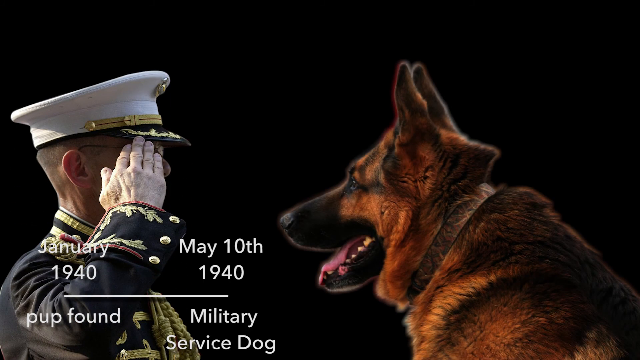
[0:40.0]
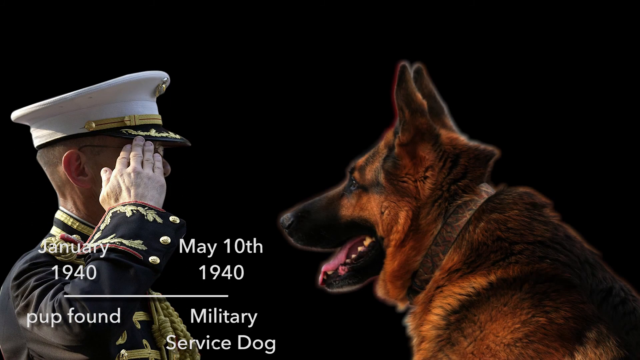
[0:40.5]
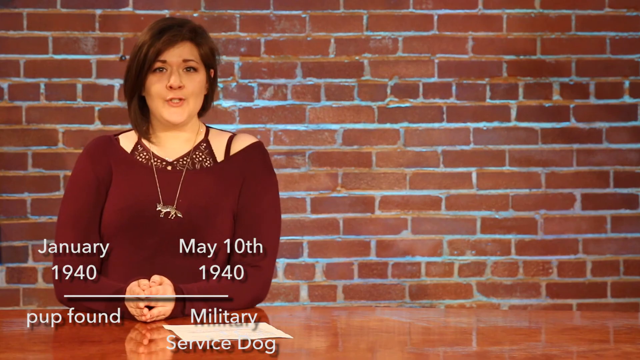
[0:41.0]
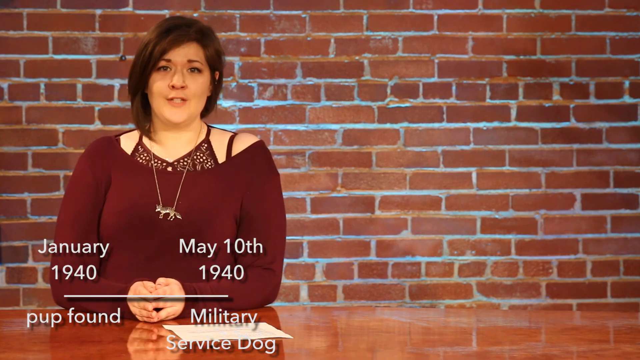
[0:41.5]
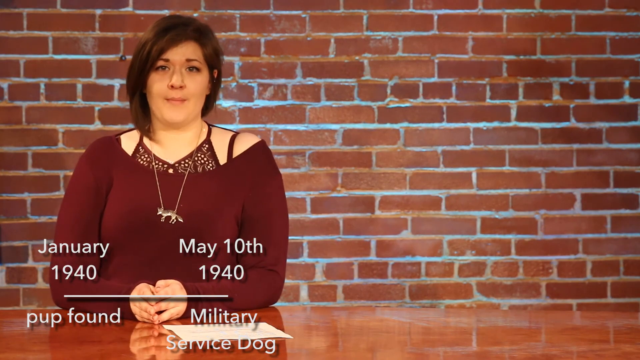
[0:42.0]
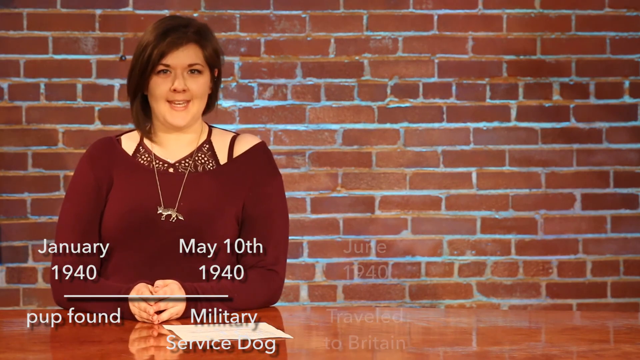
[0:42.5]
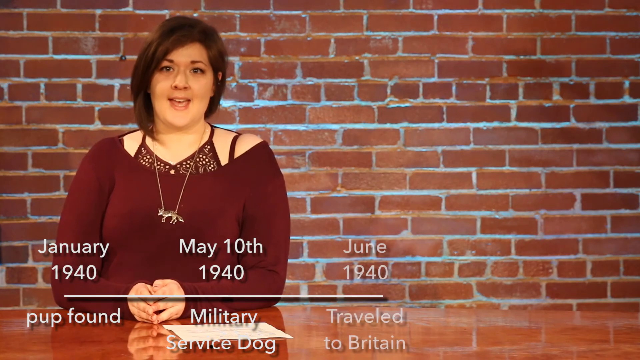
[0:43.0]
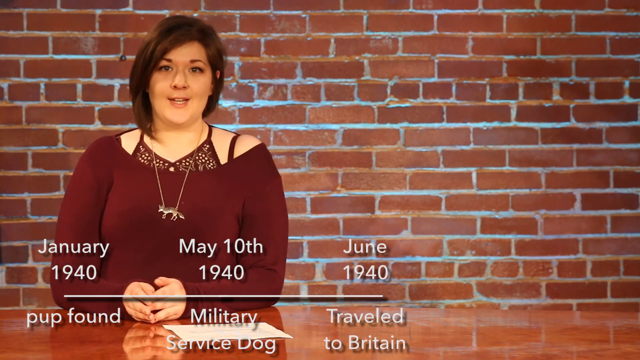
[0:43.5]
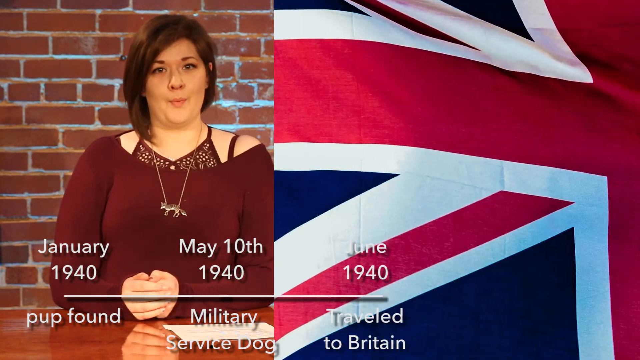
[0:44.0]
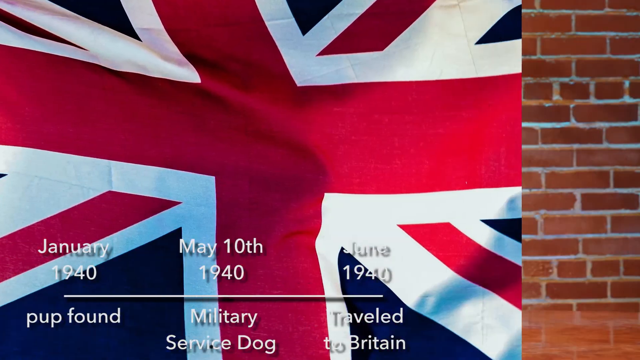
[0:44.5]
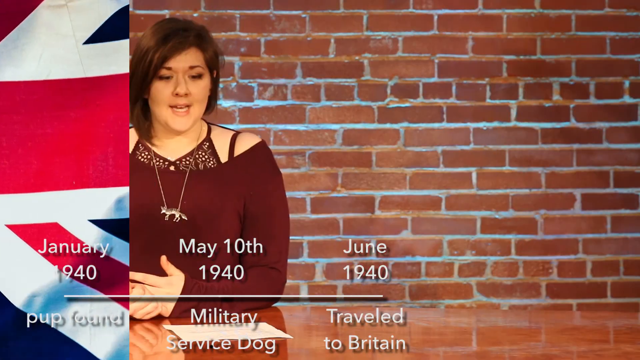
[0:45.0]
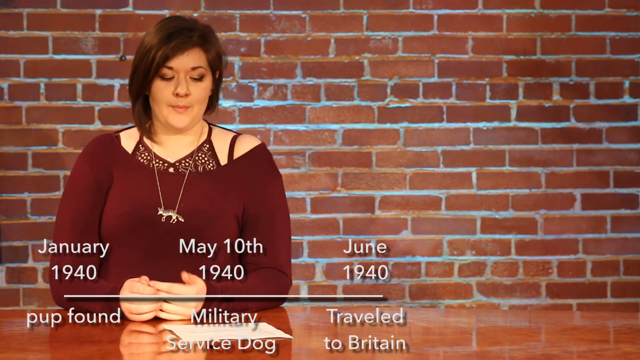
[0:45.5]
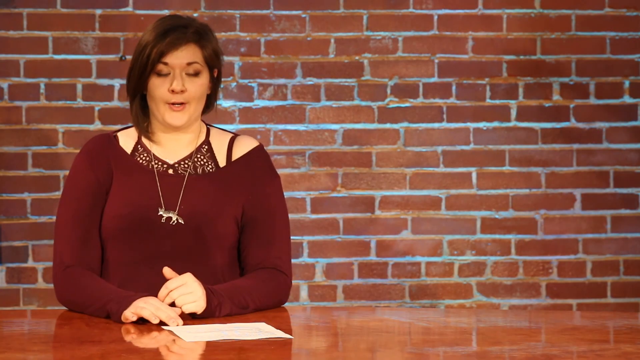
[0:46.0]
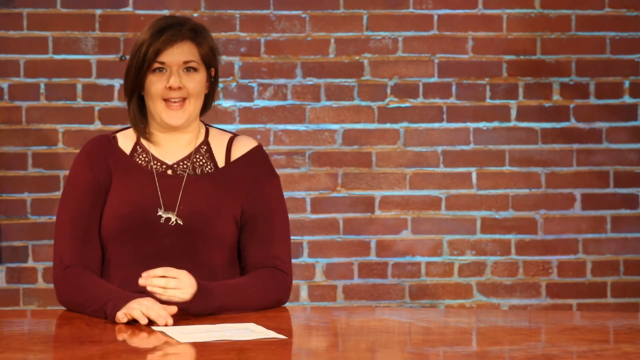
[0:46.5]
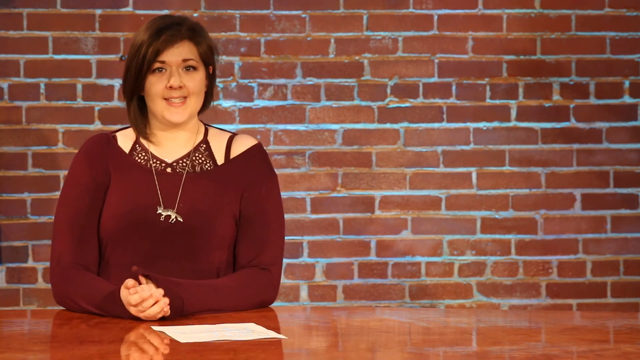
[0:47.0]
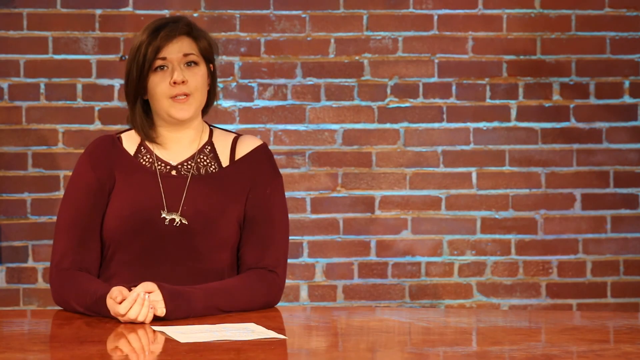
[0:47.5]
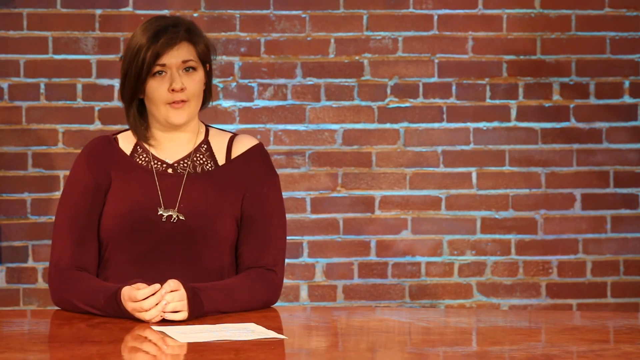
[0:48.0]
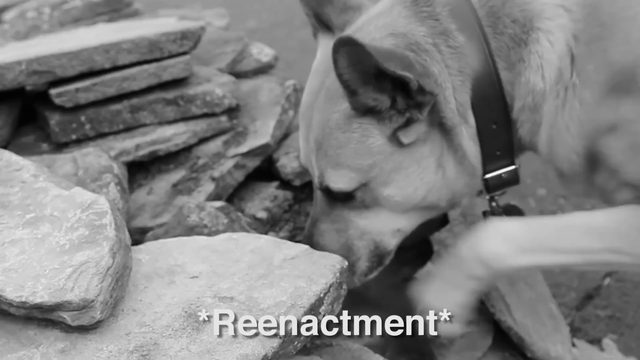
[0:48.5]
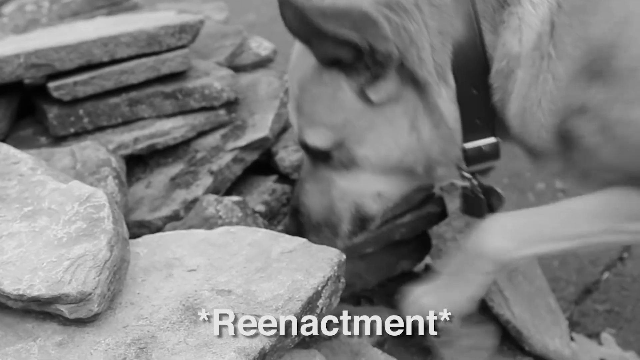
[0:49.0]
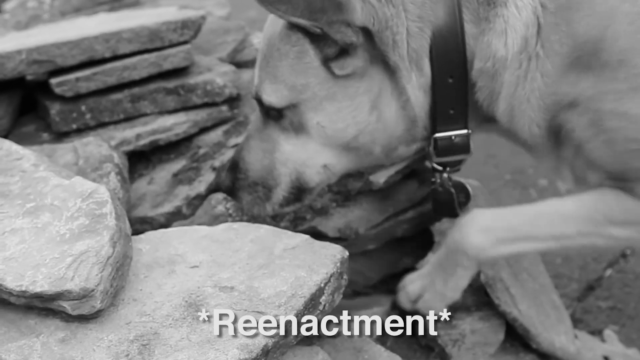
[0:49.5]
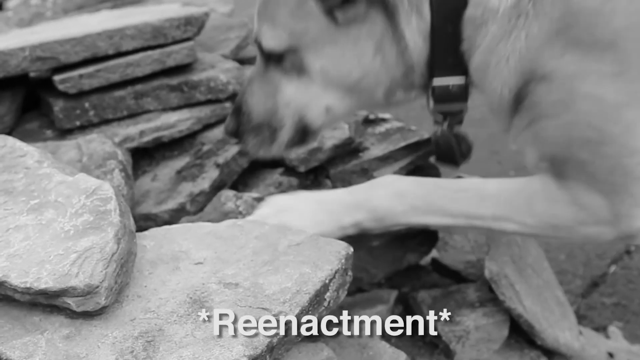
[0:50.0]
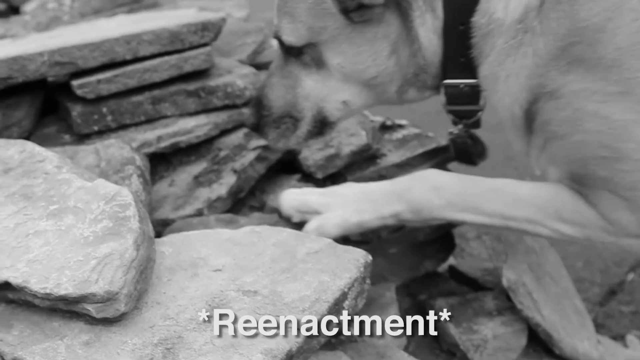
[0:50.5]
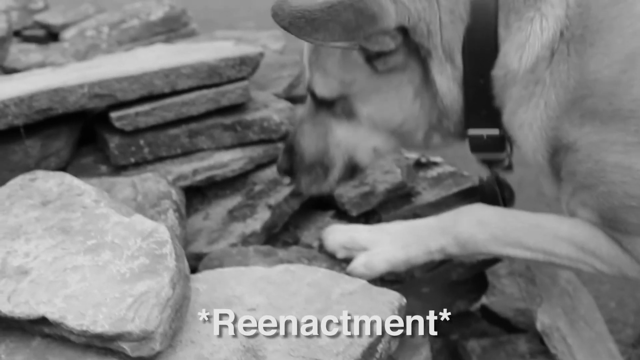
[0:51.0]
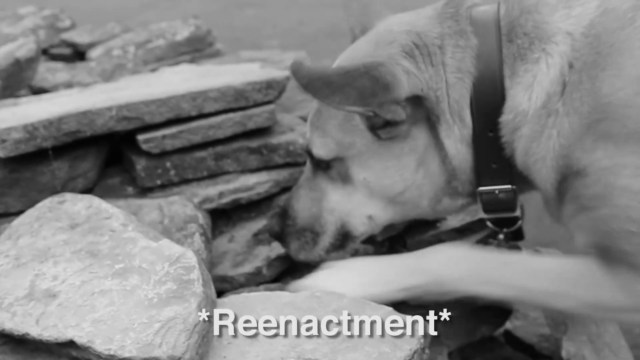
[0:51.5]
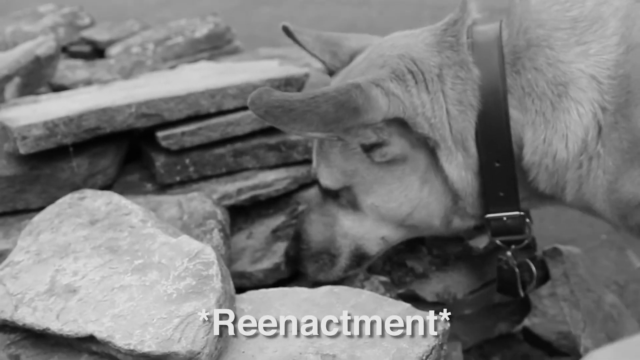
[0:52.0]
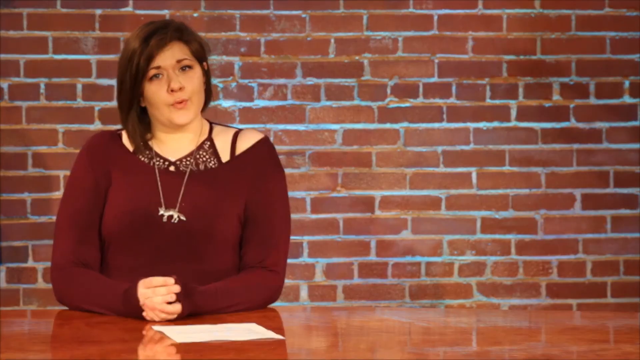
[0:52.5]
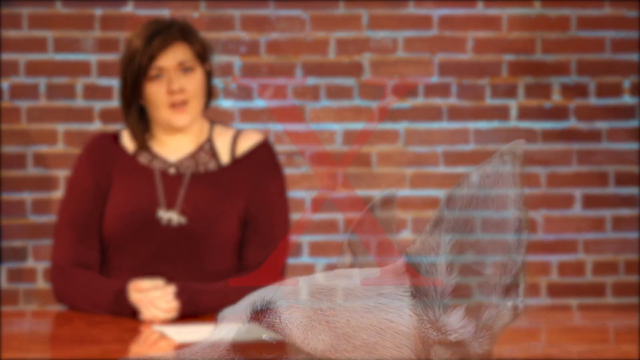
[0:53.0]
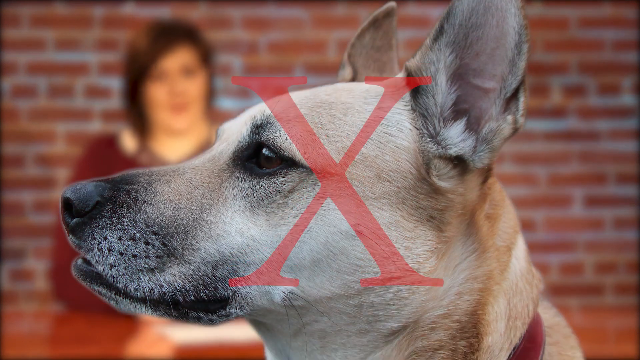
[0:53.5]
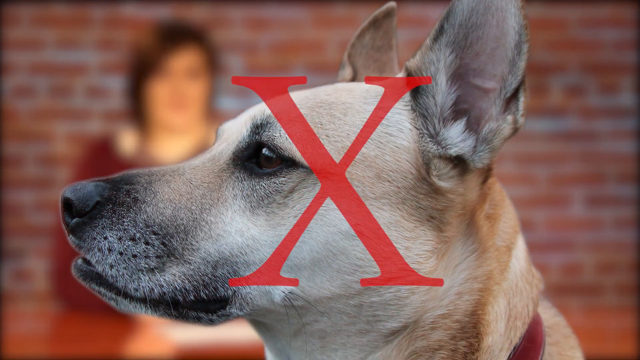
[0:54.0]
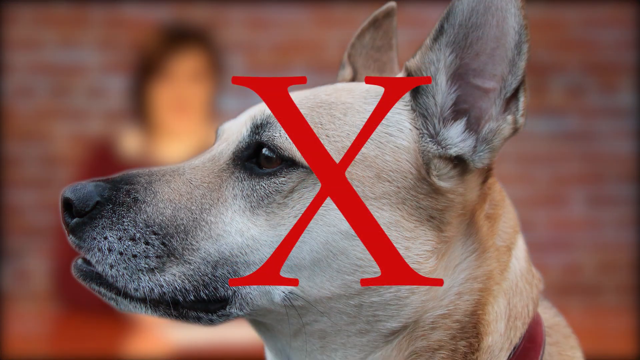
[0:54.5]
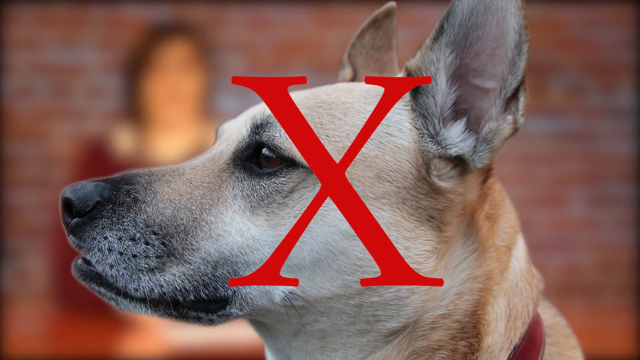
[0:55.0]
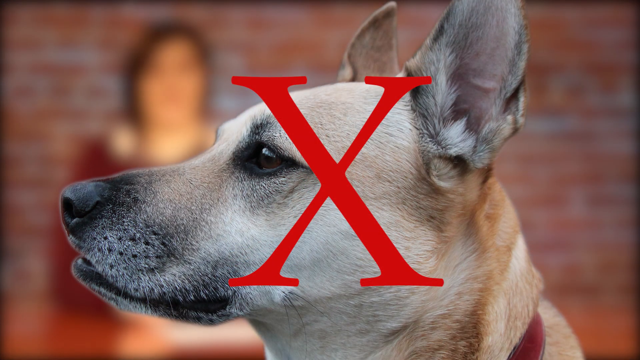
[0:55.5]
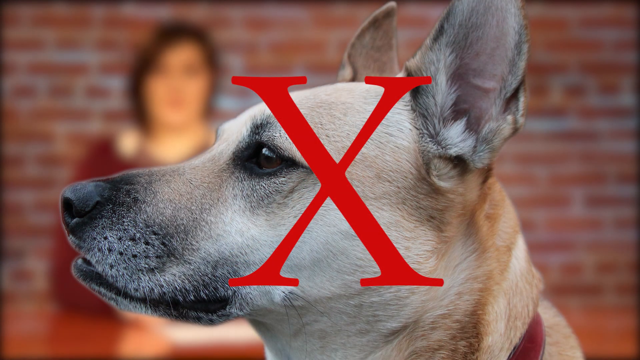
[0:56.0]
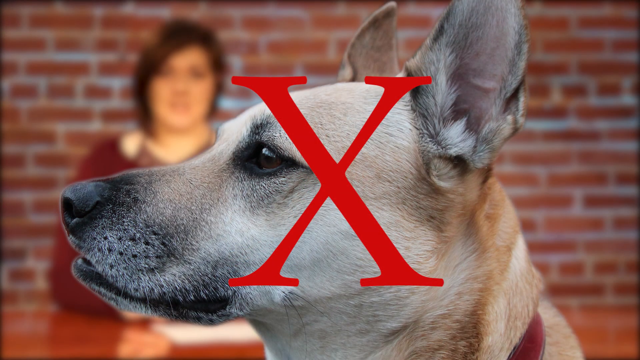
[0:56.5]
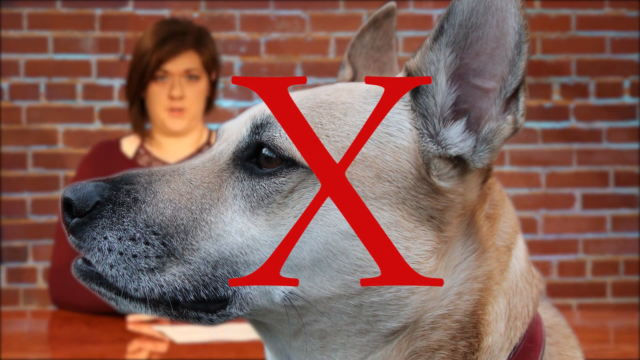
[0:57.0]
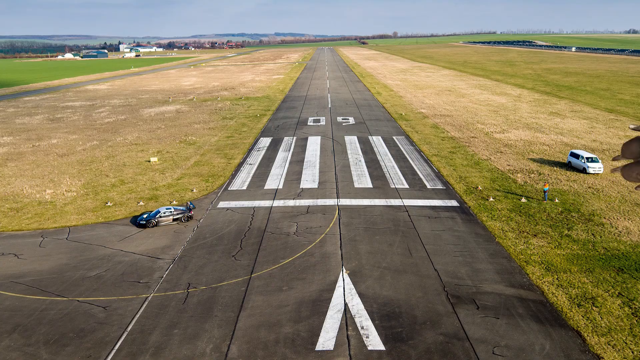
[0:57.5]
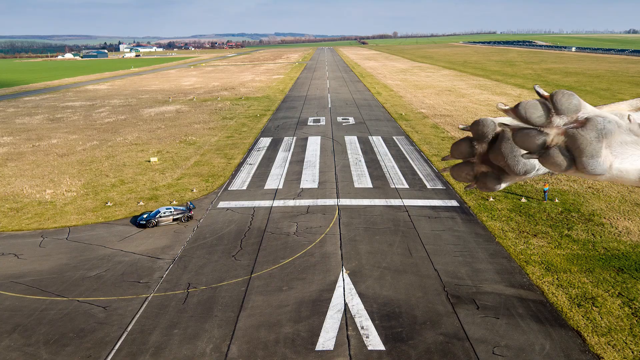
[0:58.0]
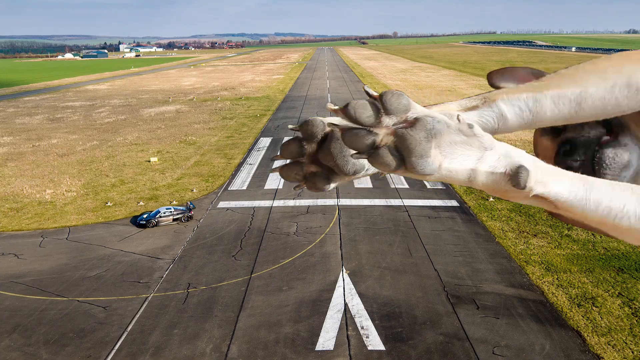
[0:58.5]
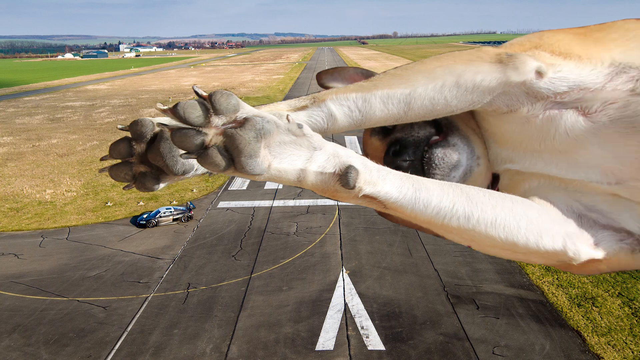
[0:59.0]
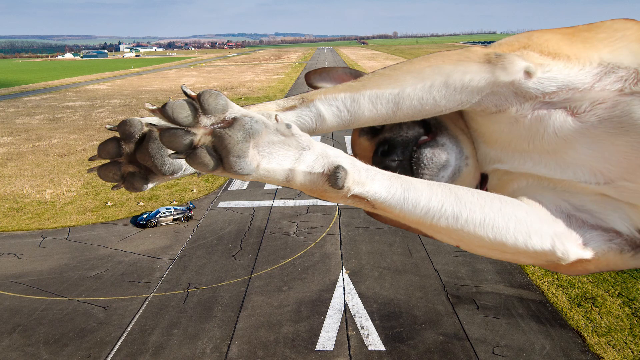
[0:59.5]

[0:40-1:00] A military person salutes a German Shepherd. The dog's face is on the right of the screen, looking at the military man on the left. The man wears a white cap with a black brim that has gold etchings on it, and it looks like he is wearing a white glove on his hand, which blocks his face as he salutes the dog. Dates on the screen say "January 1940" with "pup found" underneath, then "May 10th, 1940" with "military service dog," and then "June, 1940" with "traveled to Britain." A British flag goes by. A reenactment shows a dog digging through rocks, and then an X appears in front of the dog's face. Next, a dog is laying on top of a runway, way bigger than the runway.